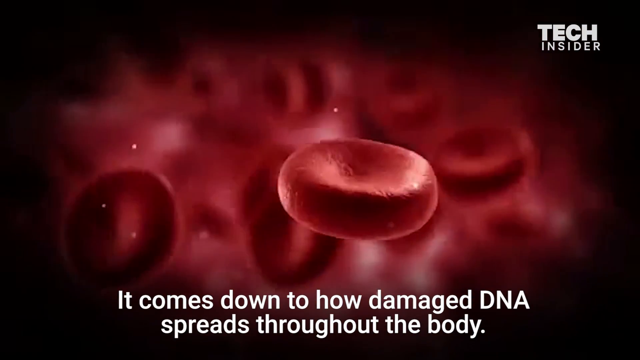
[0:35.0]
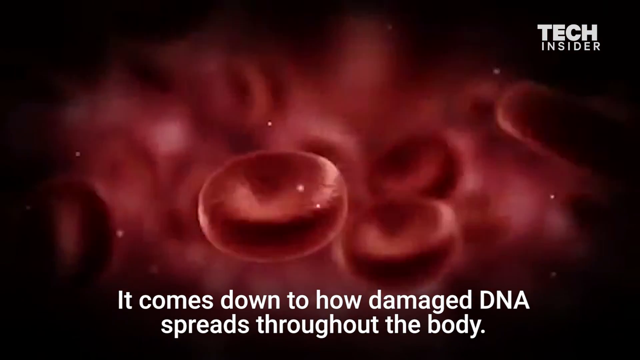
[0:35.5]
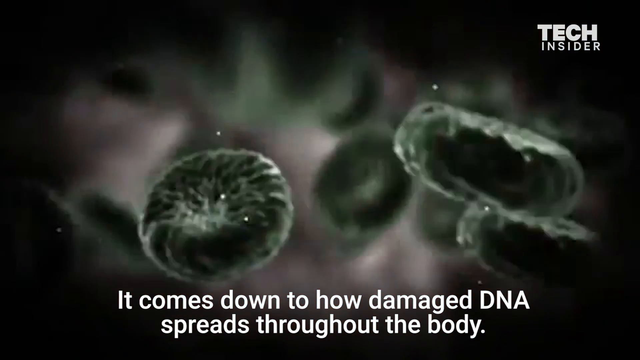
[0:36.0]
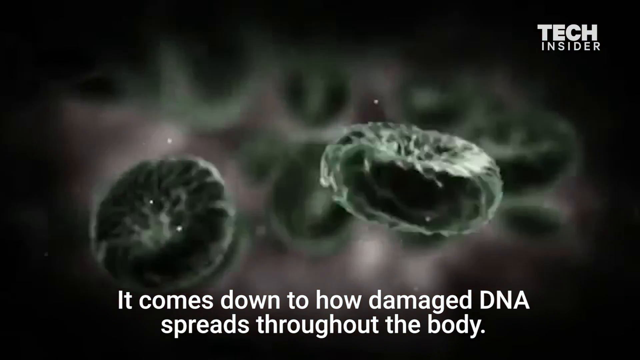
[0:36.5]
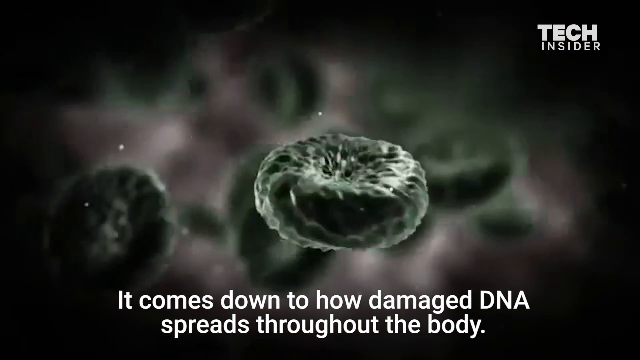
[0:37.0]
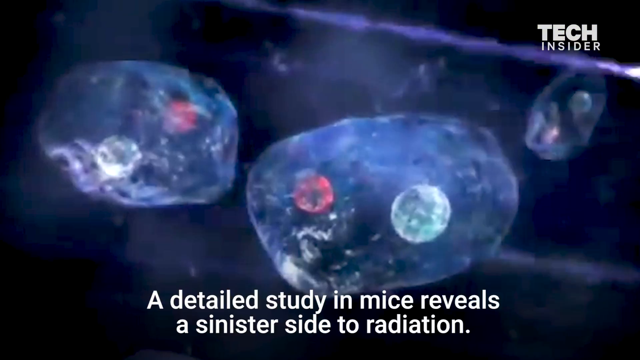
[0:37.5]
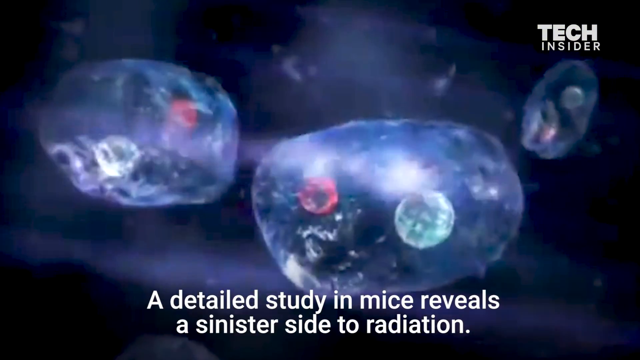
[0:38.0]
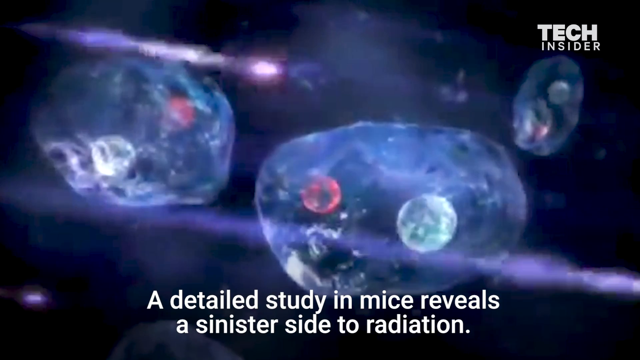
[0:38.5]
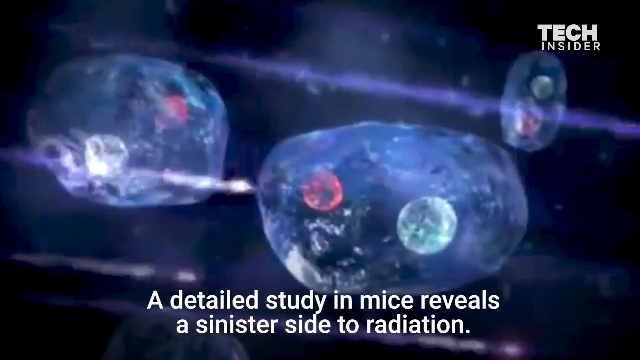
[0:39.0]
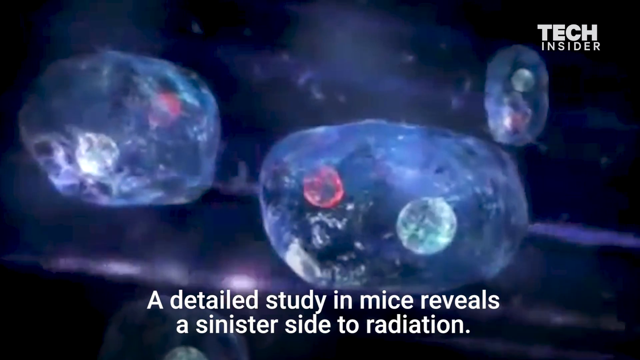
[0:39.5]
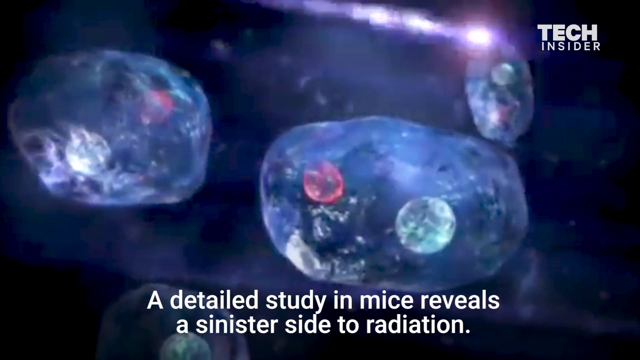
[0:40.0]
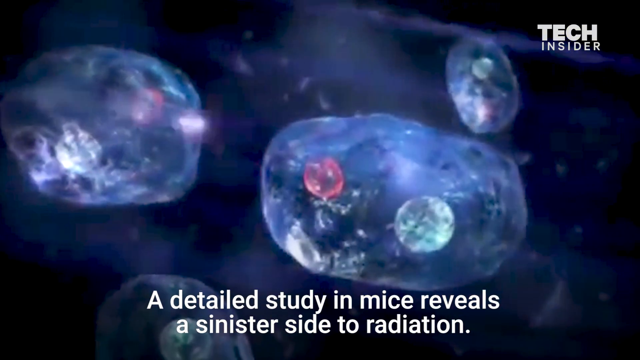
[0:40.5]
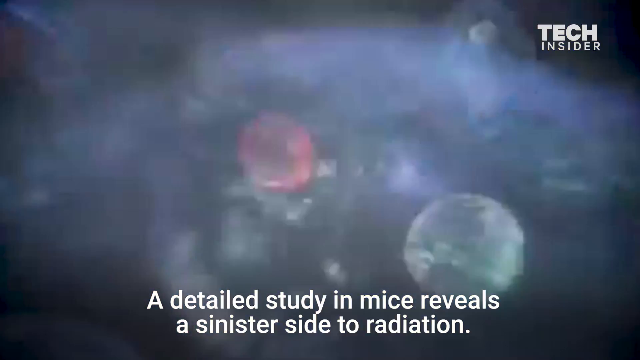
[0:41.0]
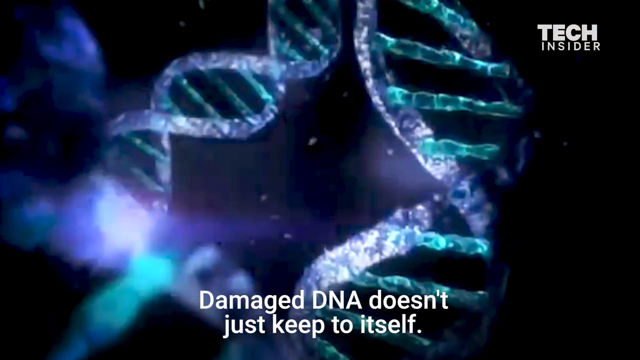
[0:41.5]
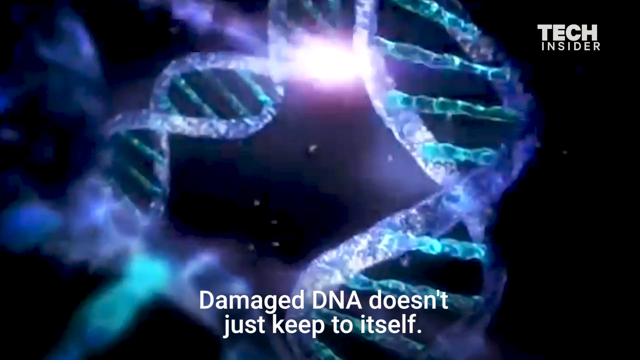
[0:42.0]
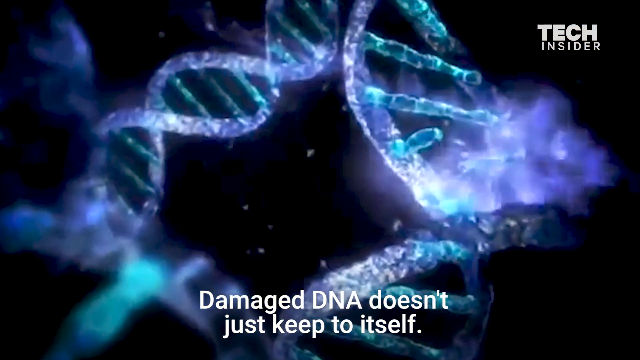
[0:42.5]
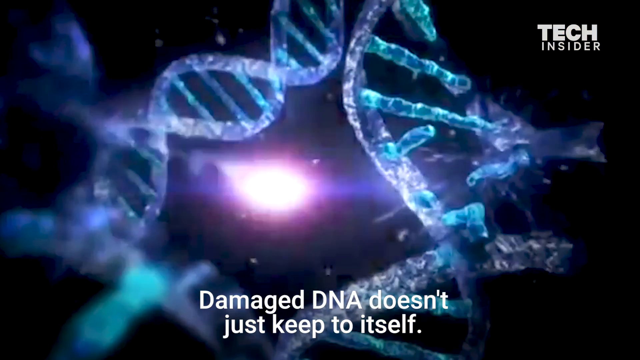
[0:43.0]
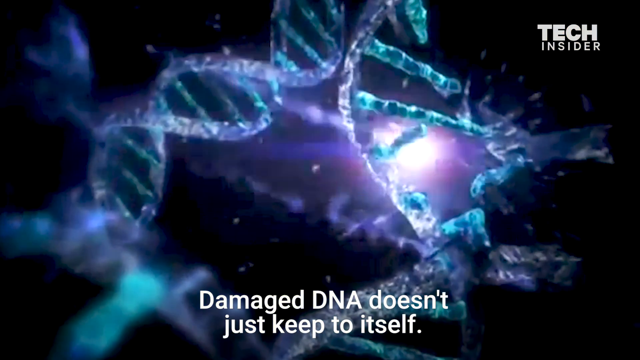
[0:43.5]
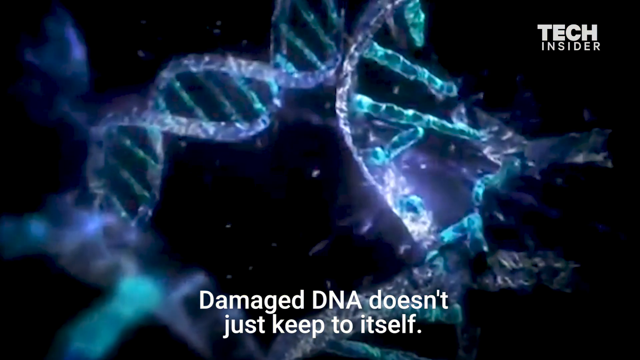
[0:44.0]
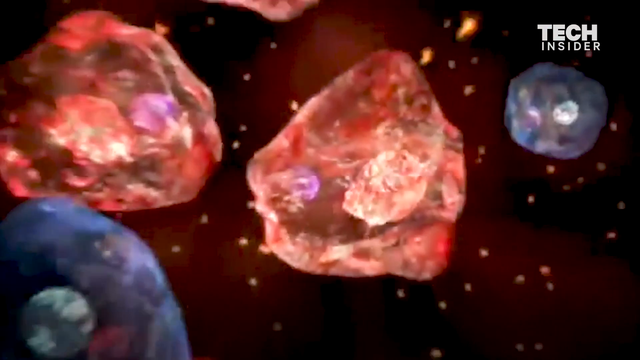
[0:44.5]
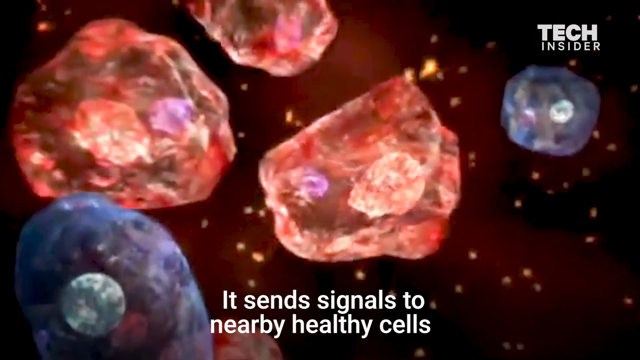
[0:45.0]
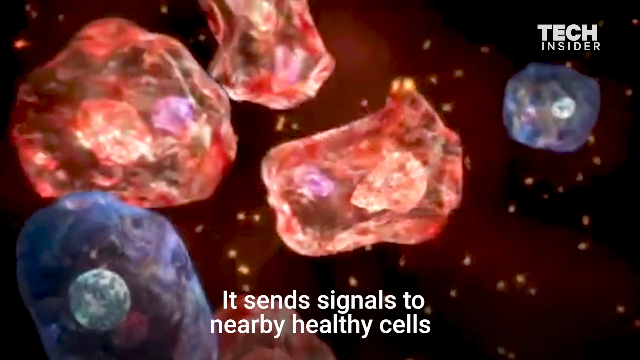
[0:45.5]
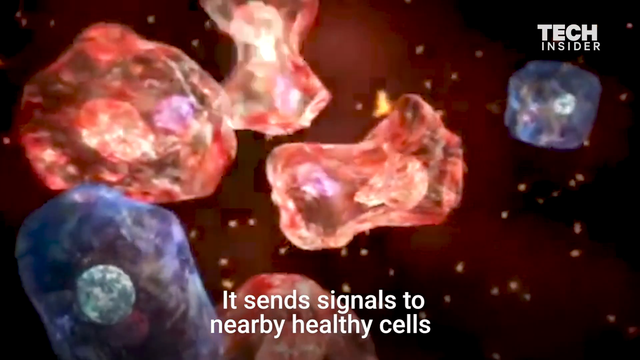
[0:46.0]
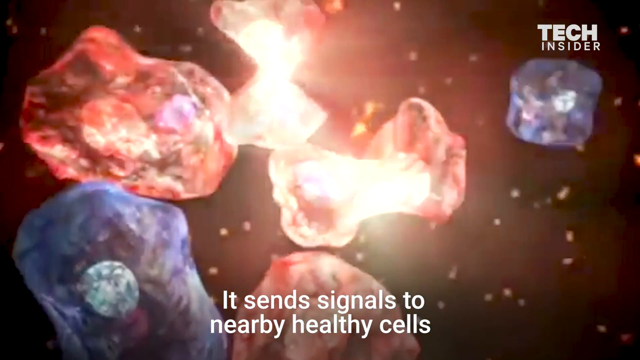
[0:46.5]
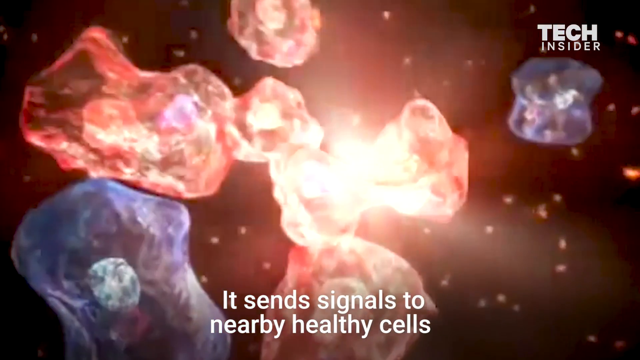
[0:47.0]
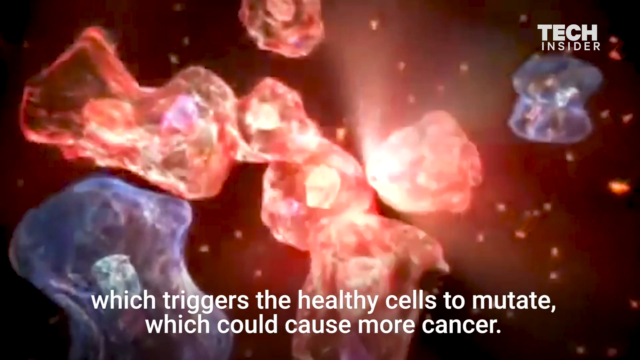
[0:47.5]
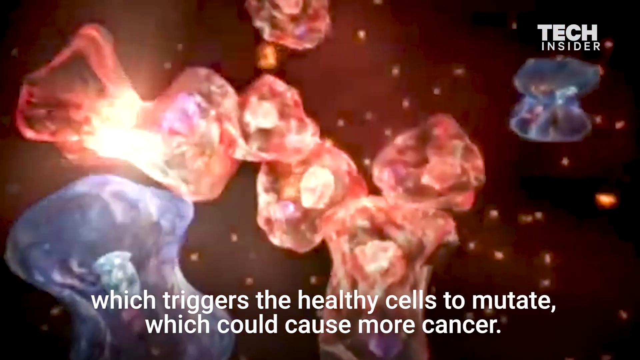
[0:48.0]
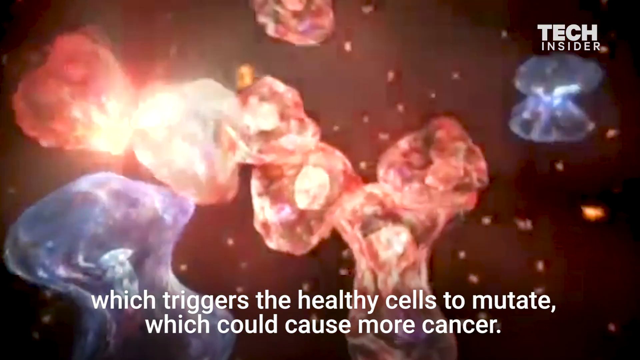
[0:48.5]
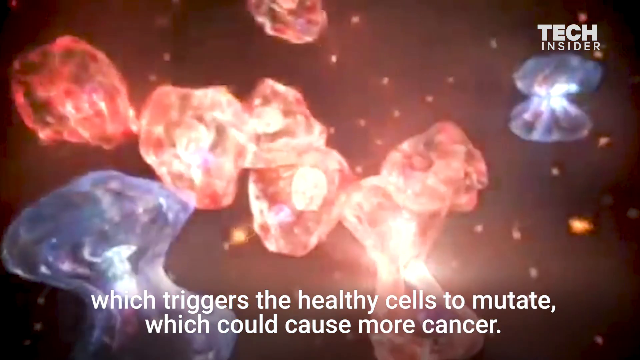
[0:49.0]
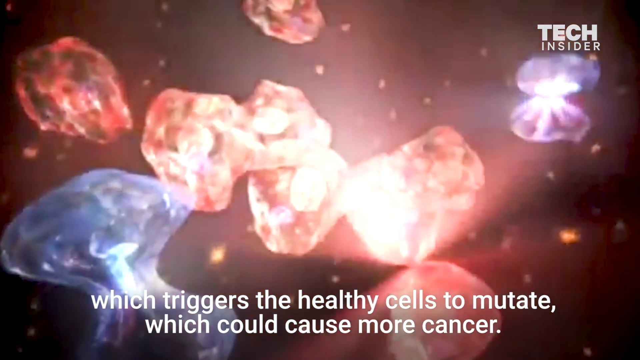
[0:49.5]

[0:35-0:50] A series of blood cells appears, along with other cells and strands of DNA. White, sort of streaks of light, presumably representing cosmic rays, cause damage to the double helix and other areas. Some cells are red, splitting and glowing, apparently representing damaged cells.